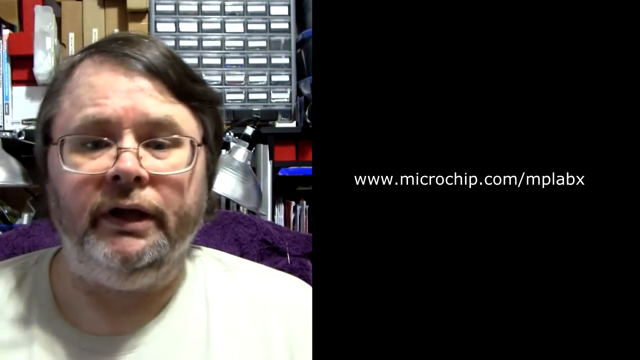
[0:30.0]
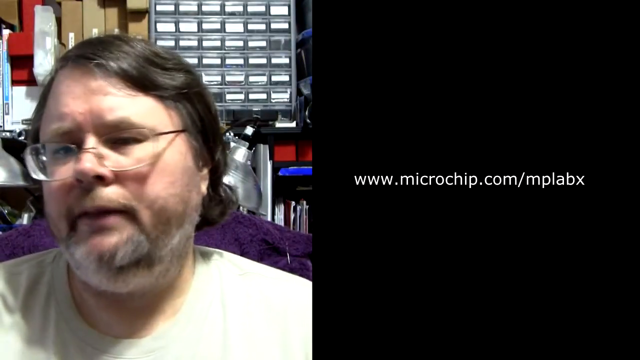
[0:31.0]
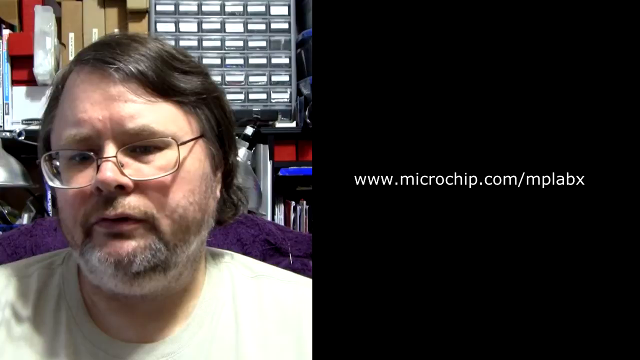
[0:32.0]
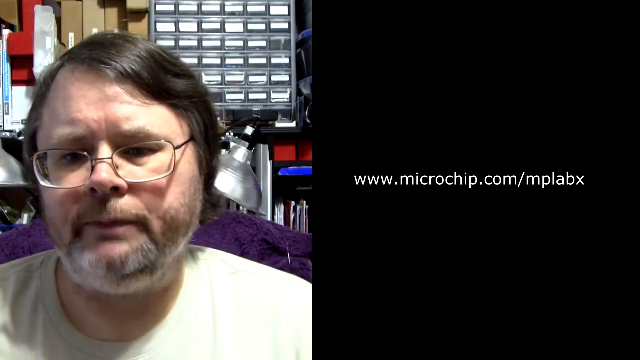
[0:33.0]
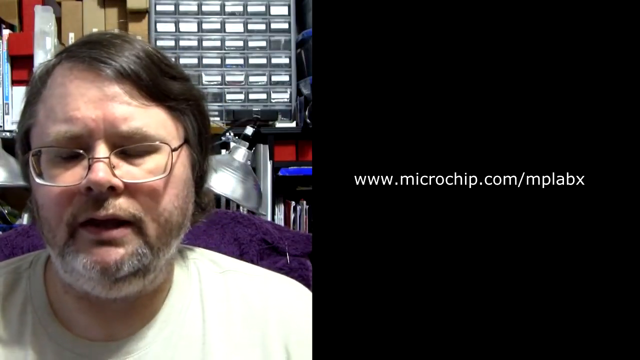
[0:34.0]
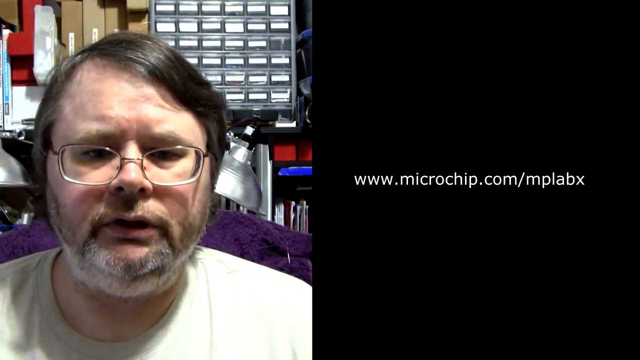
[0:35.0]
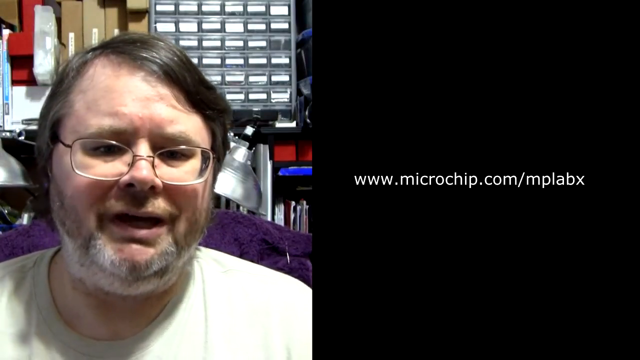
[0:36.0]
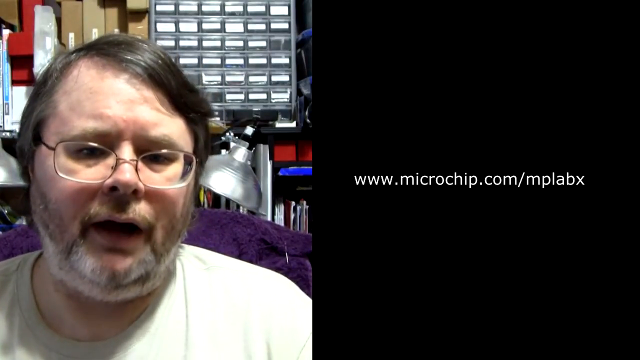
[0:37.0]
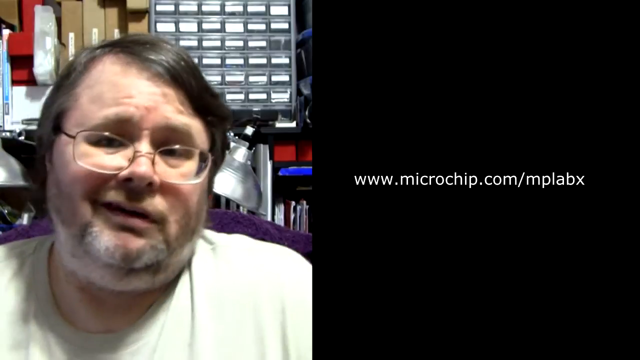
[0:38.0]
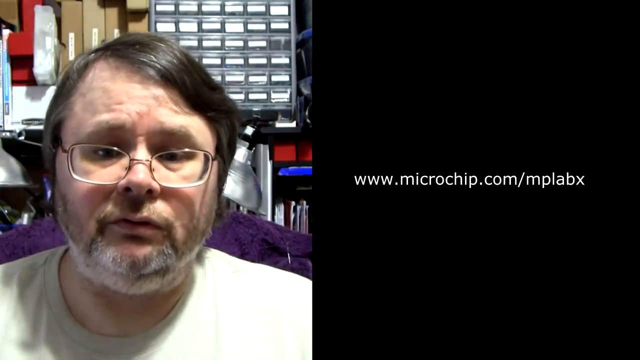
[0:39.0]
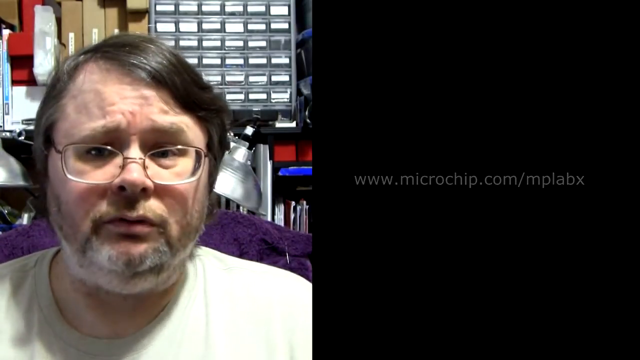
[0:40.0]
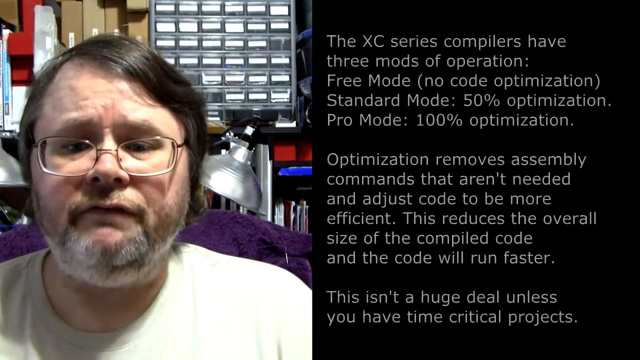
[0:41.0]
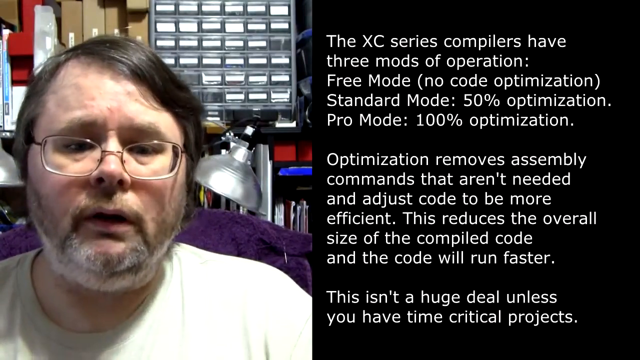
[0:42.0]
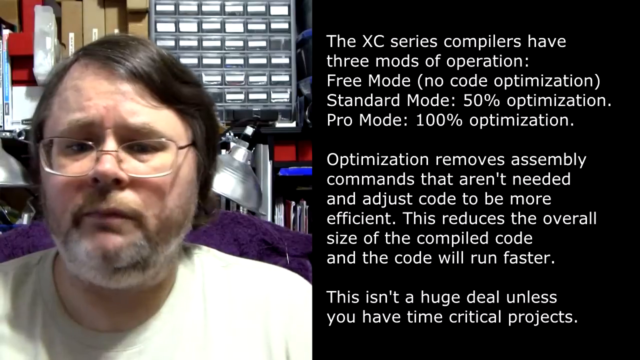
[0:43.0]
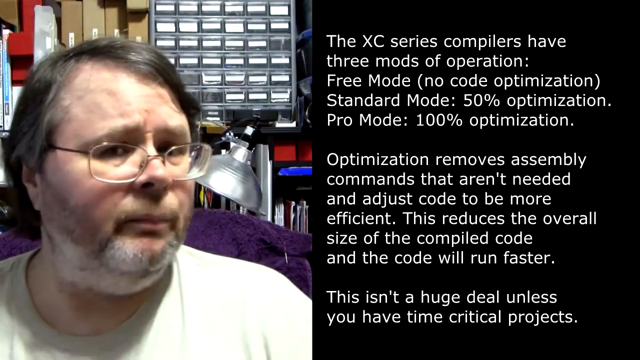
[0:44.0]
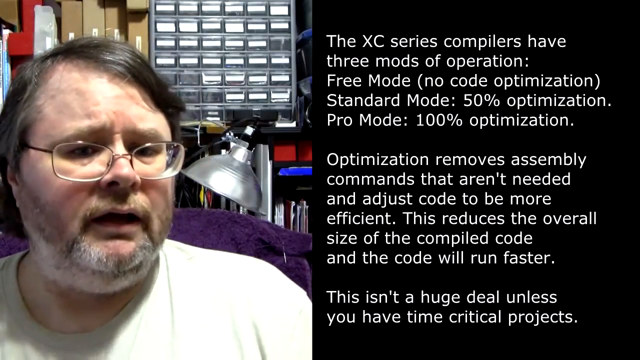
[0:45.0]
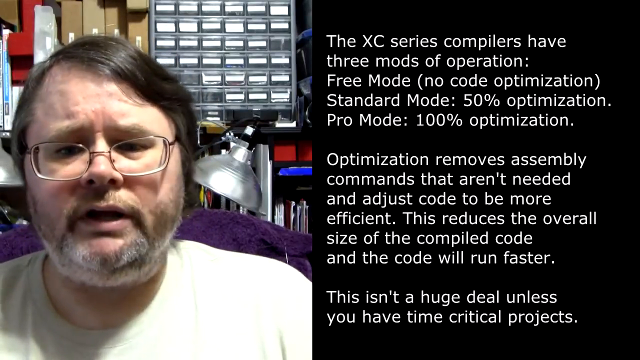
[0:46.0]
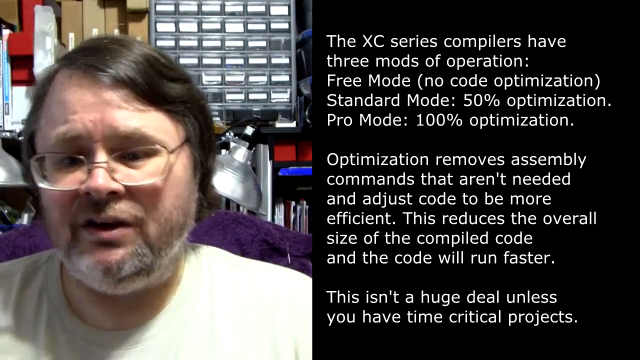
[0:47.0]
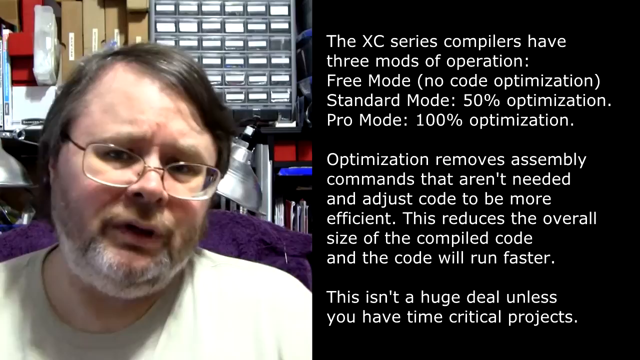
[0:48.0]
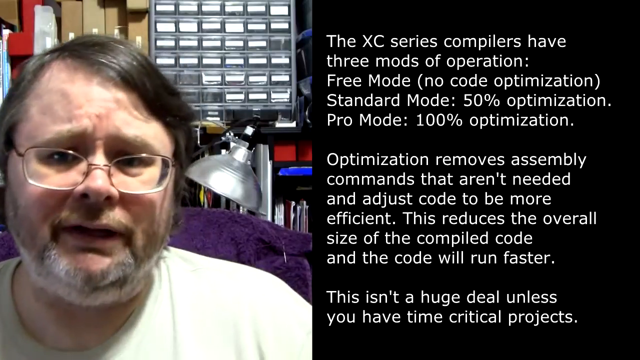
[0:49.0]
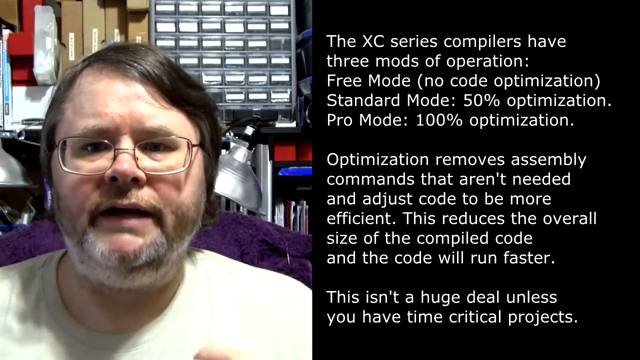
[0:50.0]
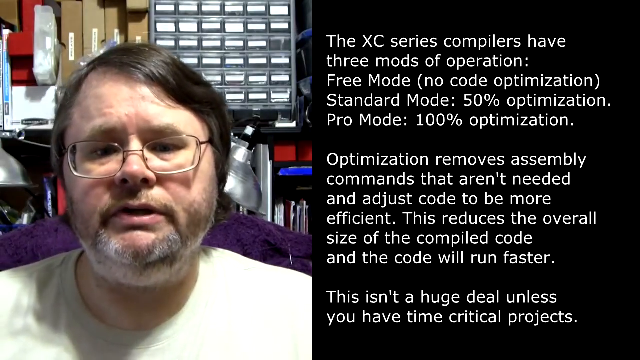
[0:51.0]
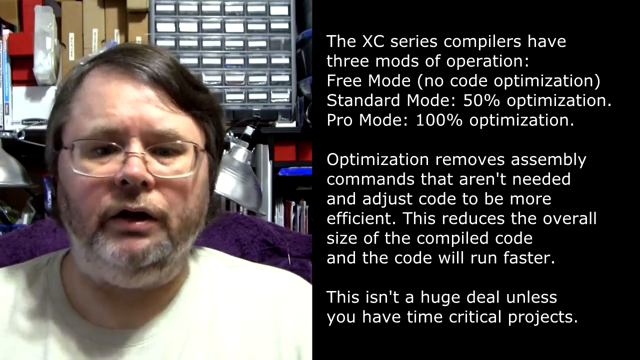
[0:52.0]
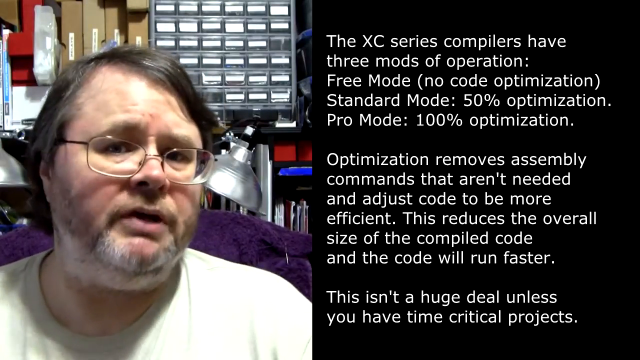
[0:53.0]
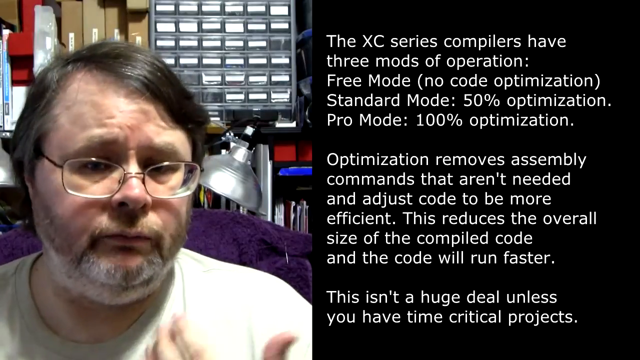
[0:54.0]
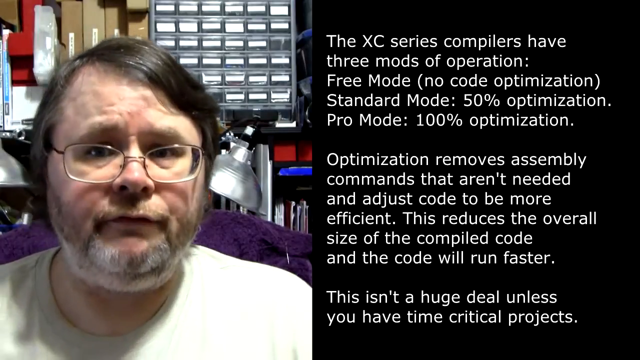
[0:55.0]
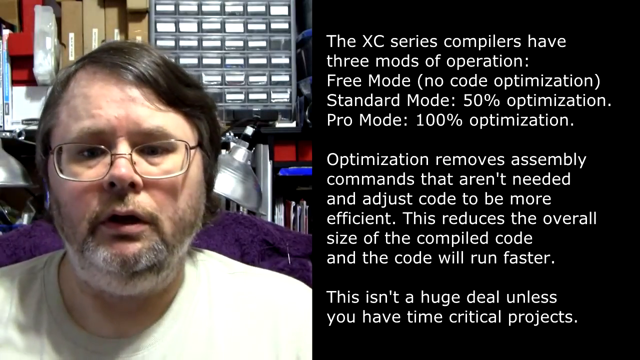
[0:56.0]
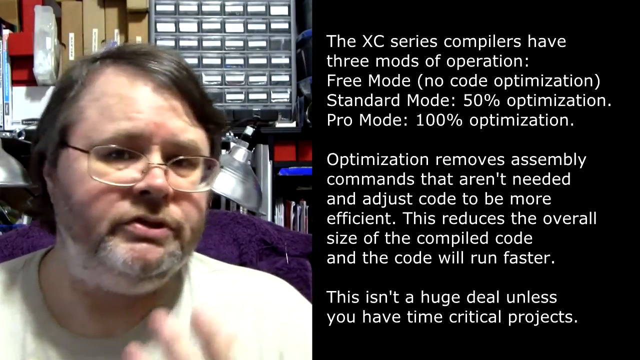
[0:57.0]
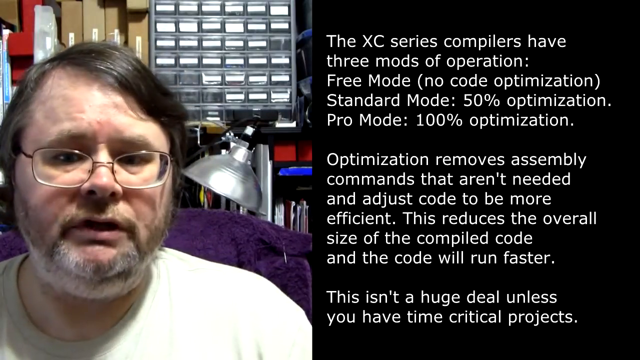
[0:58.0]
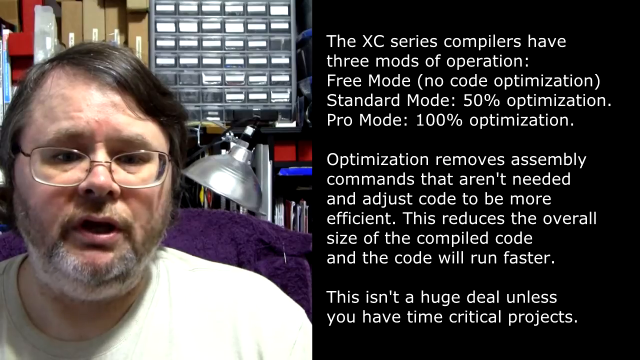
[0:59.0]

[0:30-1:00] The Caucasian man, who seems middle-aged or older, now speaks into the camera. He wears standard corrective glasses. His hair is a very dark brownish-gray; his beard is gray on the chin and grayish-white beneath, around the neck, and he has a somewhat brownish or brunette mustache and sideburns. He wears what looks like a beige, very light t-shirt. To his right on the screen is a URL in white lettering reading "www.microchip.com/mplabx", set against a completely pitch-black background. He begins talking, moving his head to the left or right and then back to the middle as he speaks, and at one point he slightly shrugs his shoulders. As he talks, text appears on the right side of the screen in white letters.